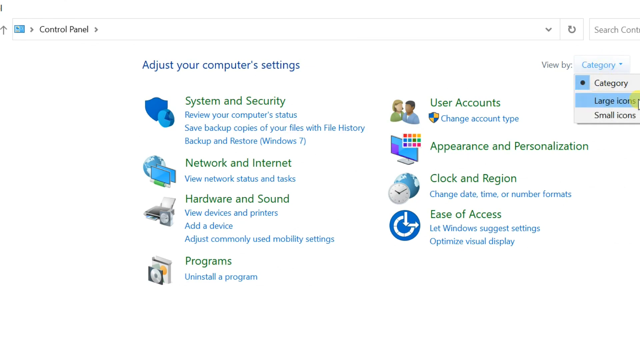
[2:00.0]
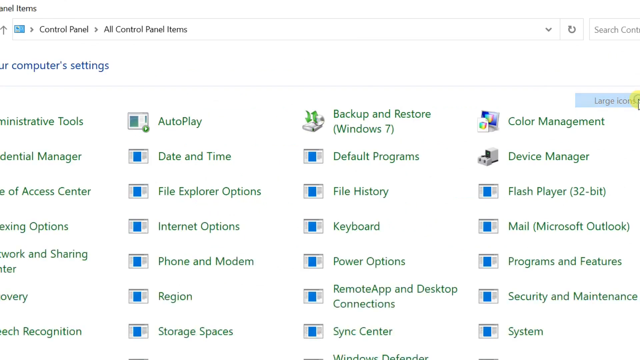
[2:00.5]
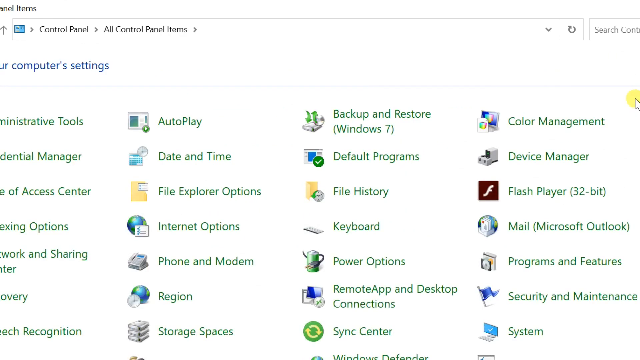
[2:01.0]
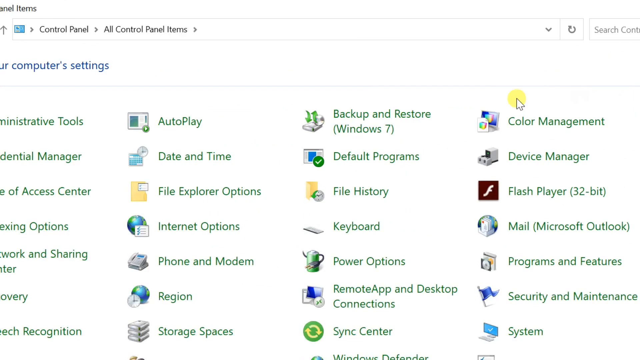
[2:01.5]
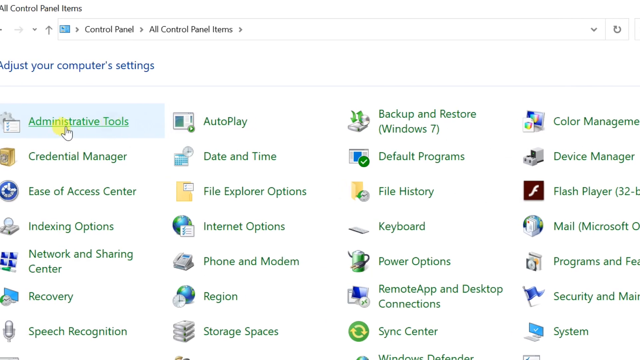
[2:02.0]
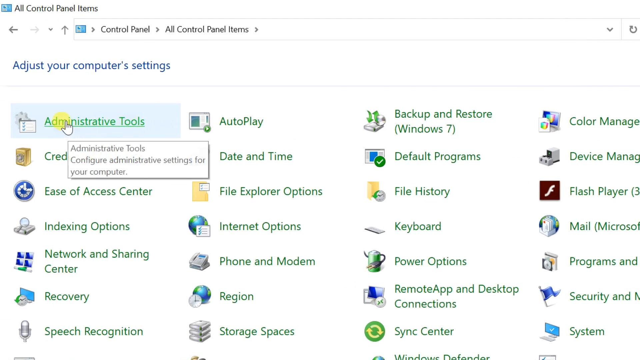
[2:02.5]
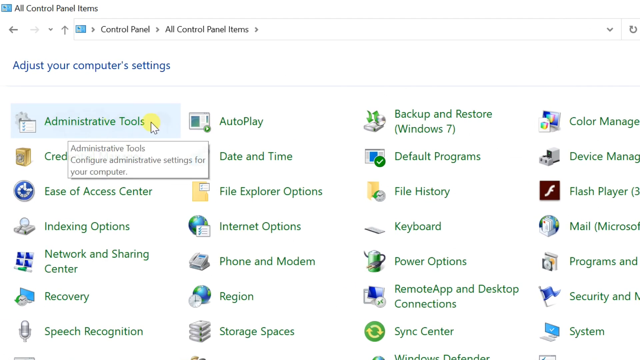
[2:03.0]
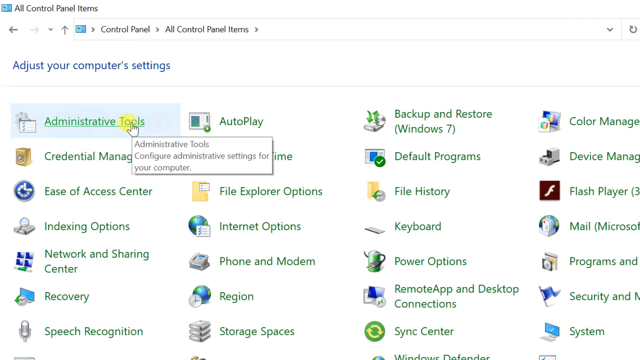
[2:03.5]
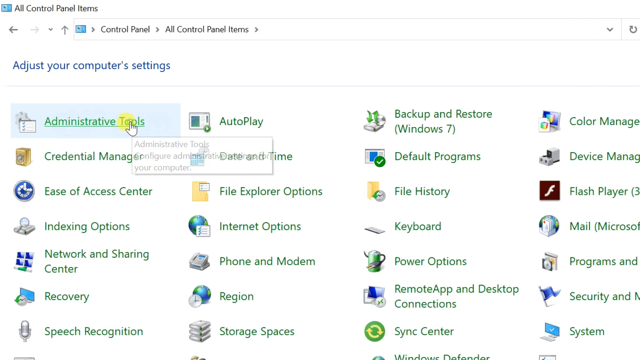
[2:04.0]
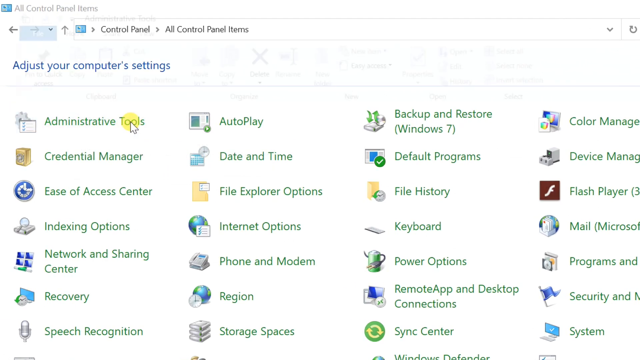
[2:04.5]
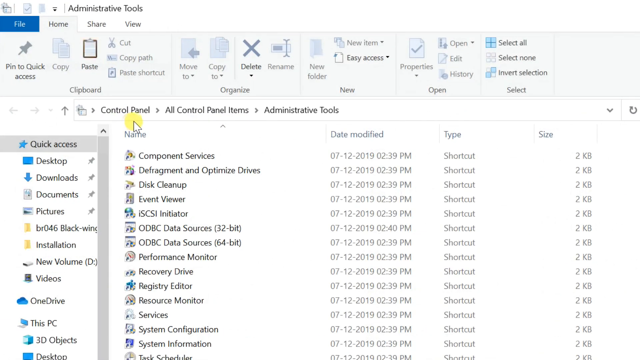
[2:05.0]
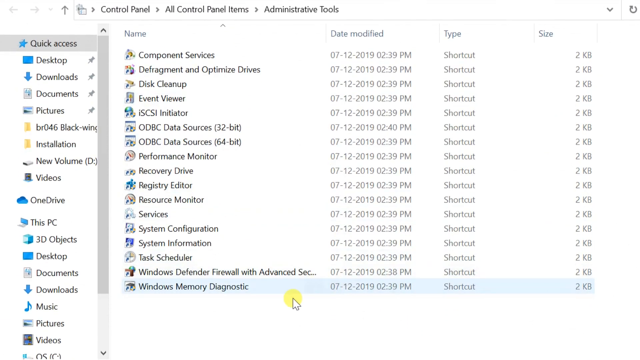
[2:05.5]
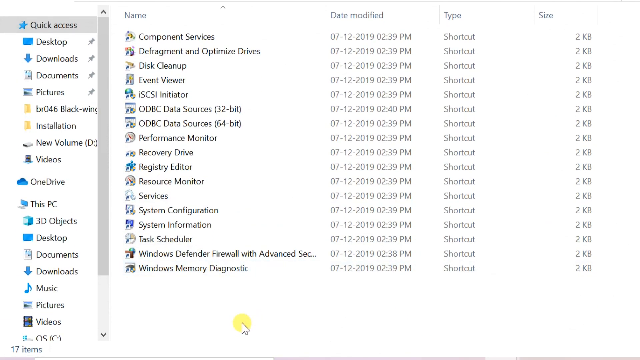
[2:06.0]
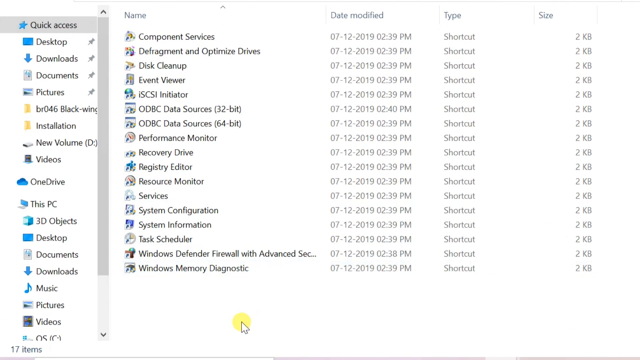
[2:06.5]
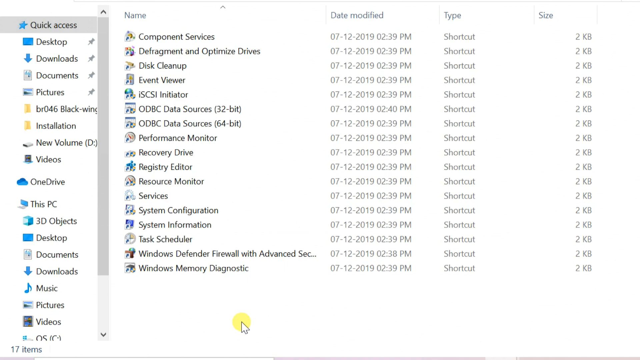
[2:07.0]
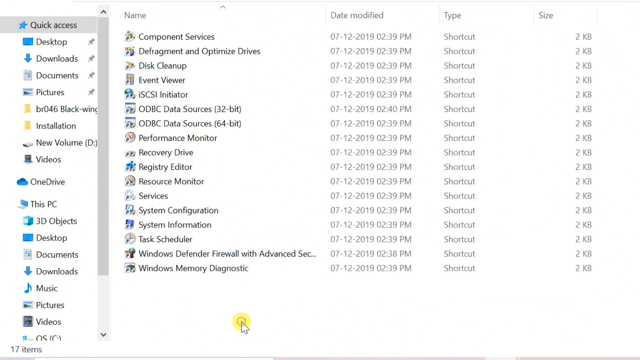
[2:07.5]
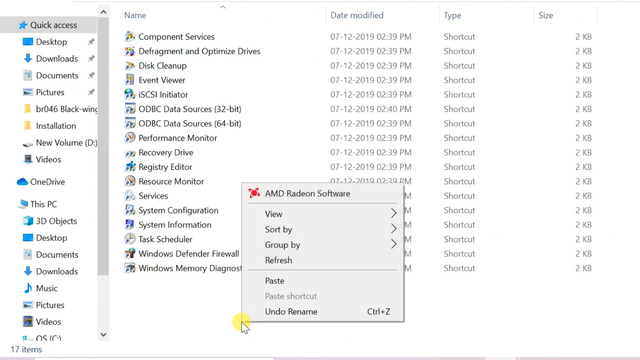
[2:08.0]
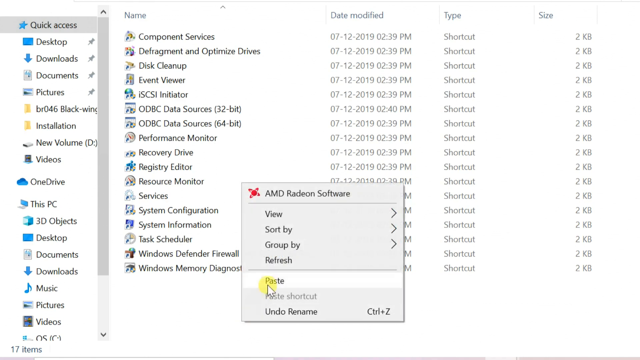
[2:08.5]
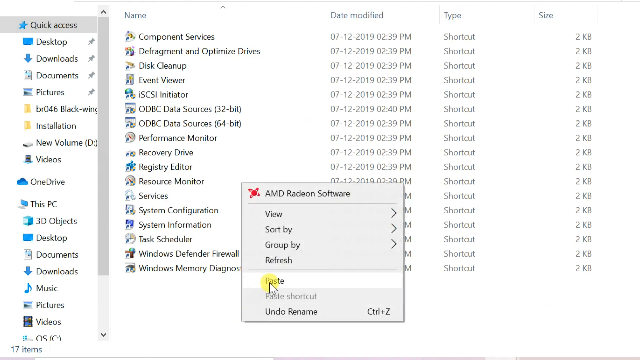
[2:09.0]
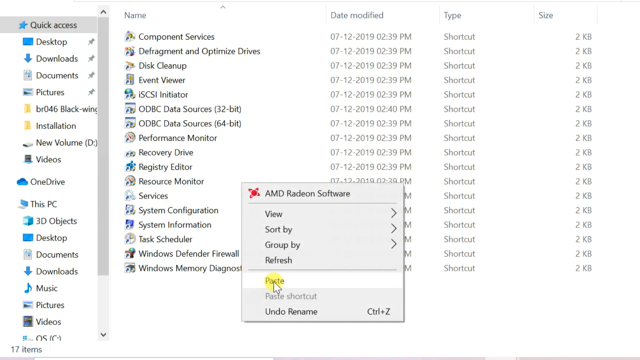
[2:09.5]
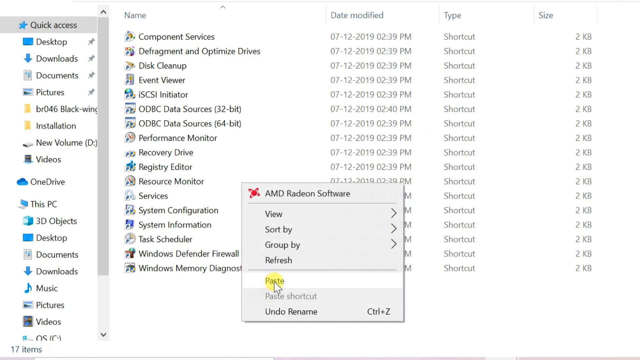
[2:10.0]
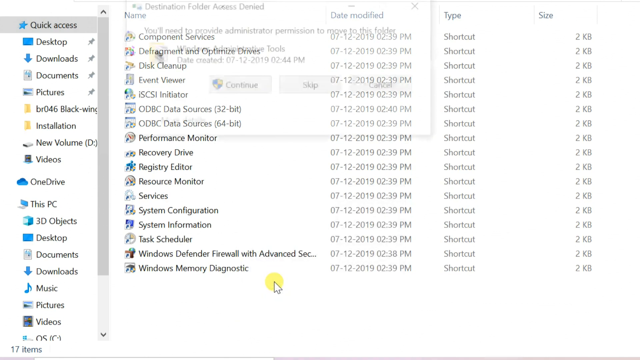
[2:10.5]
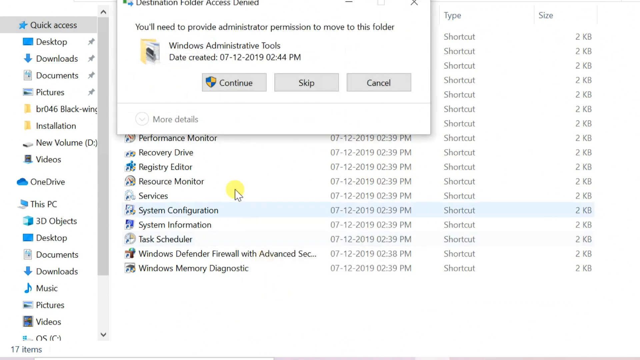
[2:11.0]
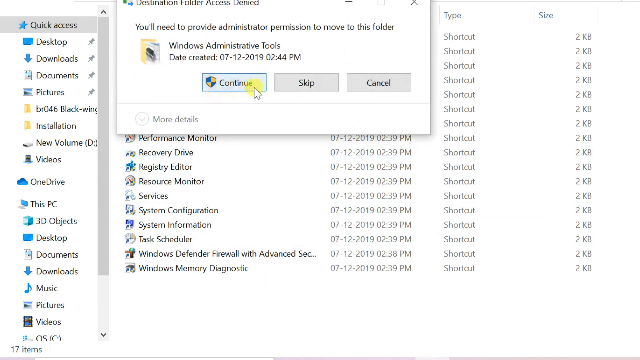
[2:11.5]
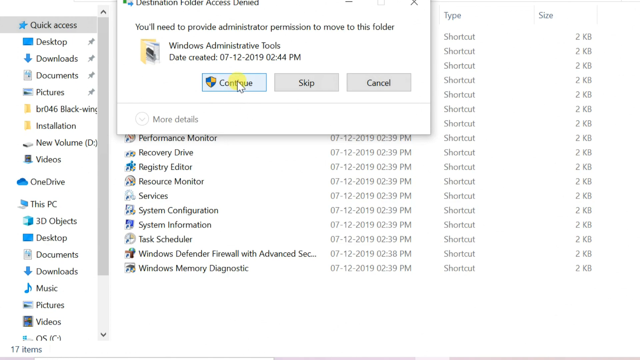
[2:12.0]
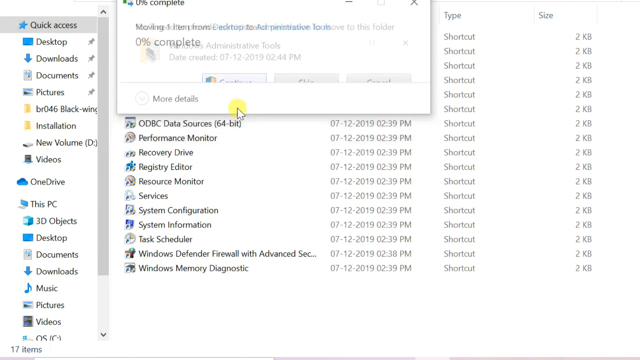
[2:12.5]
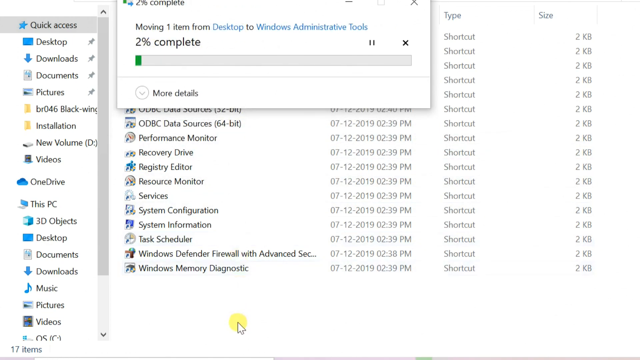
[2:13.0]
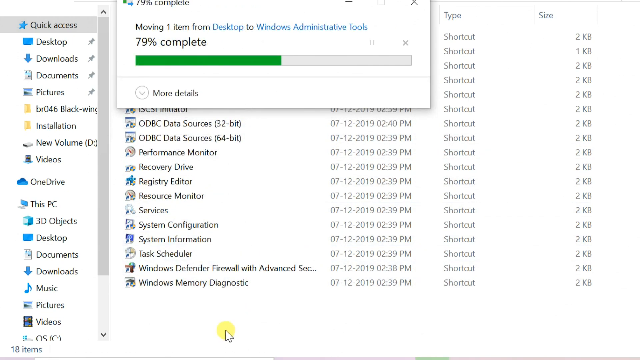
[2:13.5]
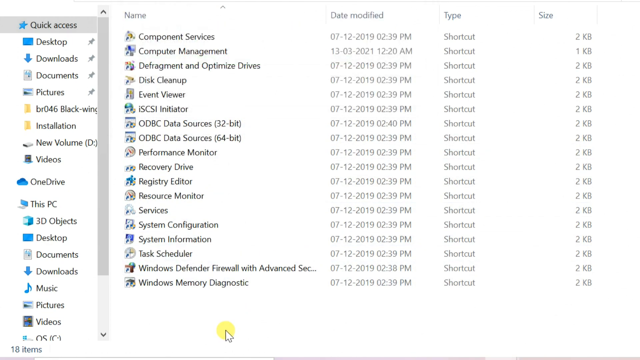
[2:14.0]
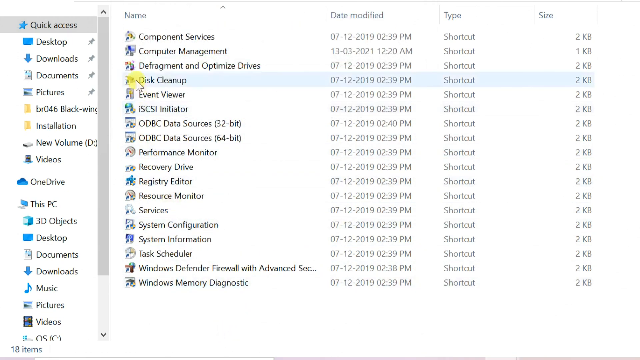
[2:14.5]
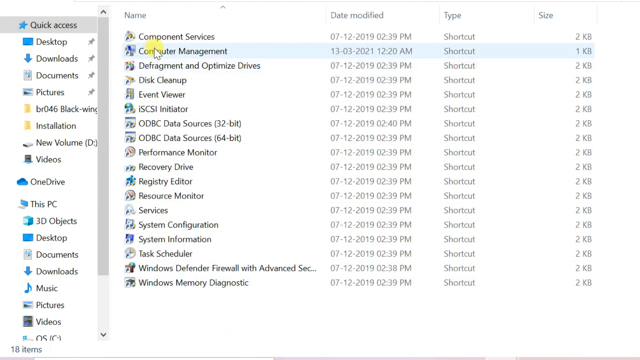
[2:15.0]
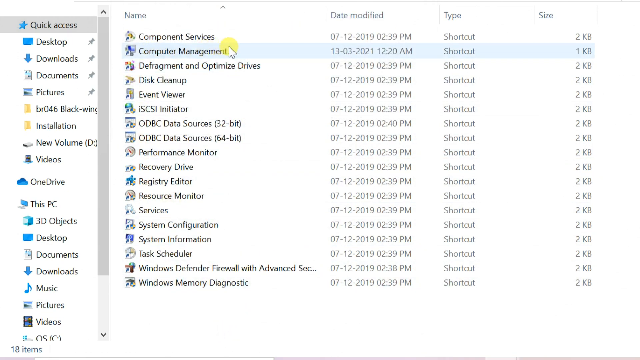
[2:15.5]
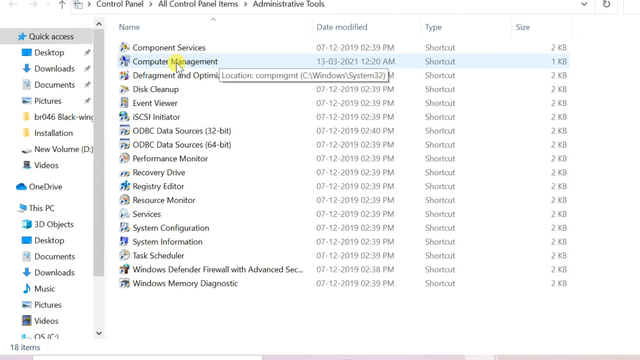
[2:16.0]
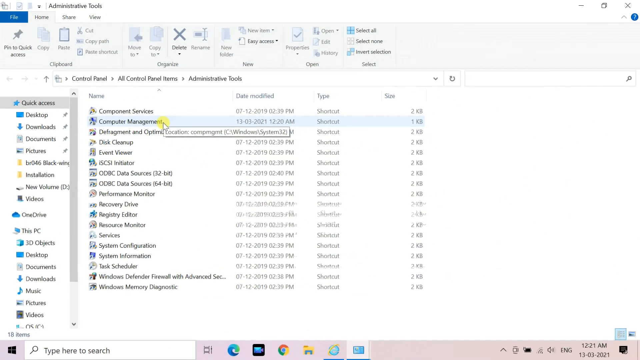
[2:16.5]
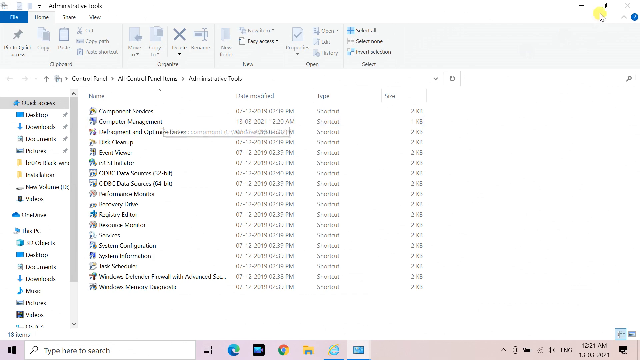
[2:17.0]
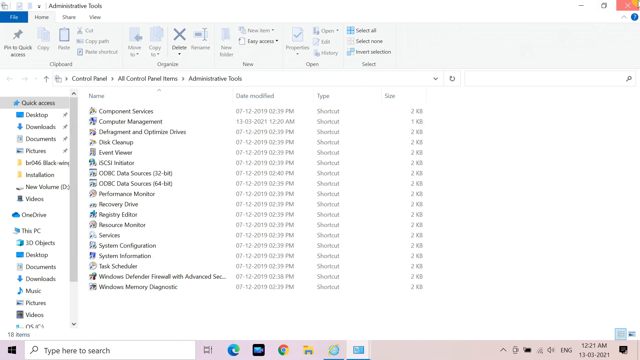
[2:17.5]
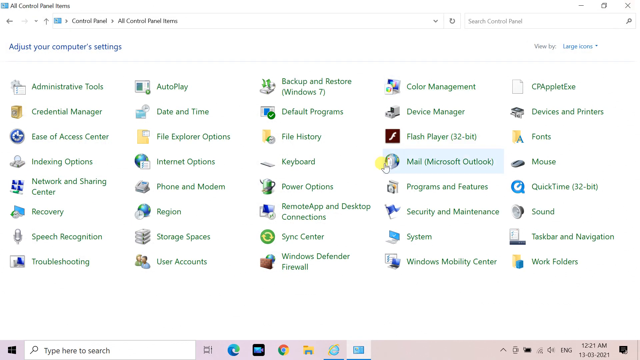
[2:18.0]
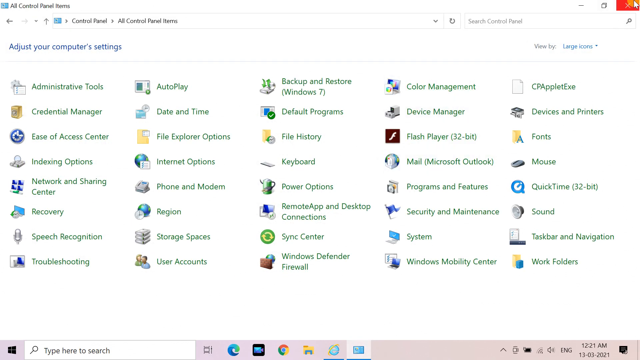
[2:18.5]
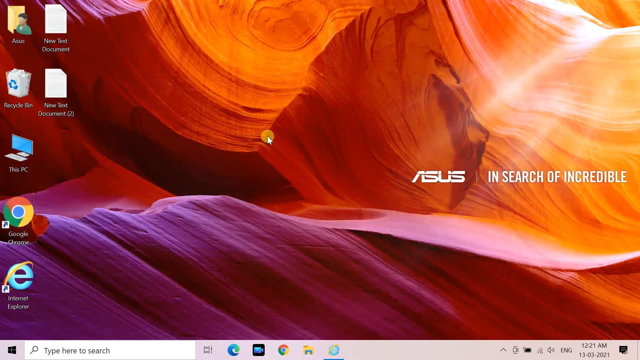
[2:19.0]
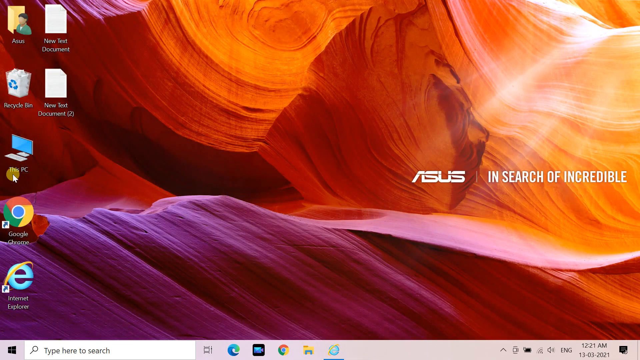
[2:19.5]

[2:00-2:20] Different parts of the control panel are shown, opening to different areas of the computer and types of files. It seems the person is screen recording these actions. They click on Administrative Tools, scroll down, and click in the documents area to hit Paste. A prompt asks whether they need to provide administrative permission to move the folder, and they show how to provide it, adding the file that says Computer Management into the quick access of the All Controls panel. The shortcut is added to this area, and they circle around it to show where it was added. Then they close all the windows and put the mouse again on the area that says This PC.